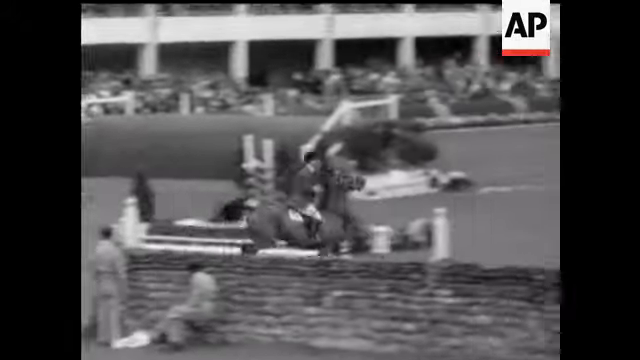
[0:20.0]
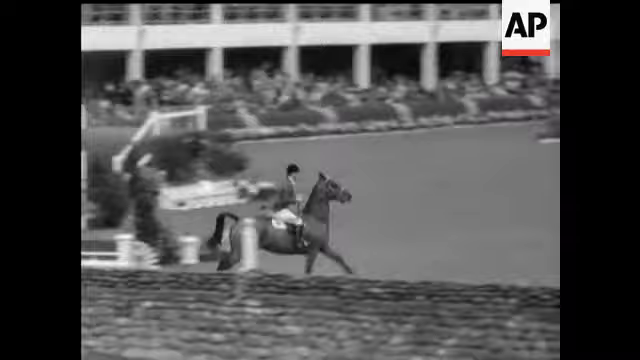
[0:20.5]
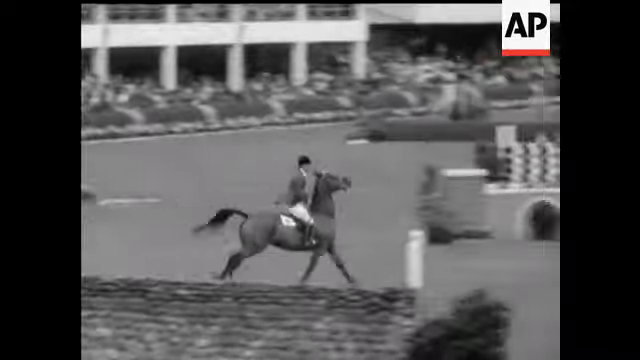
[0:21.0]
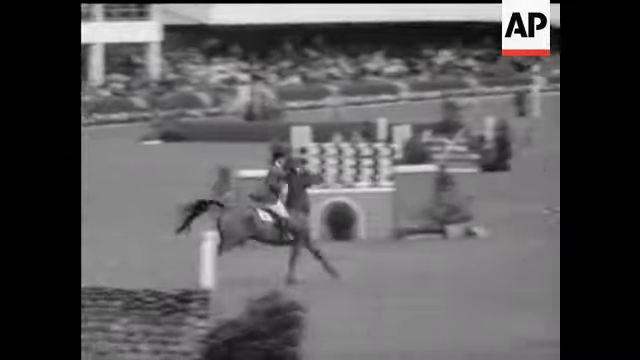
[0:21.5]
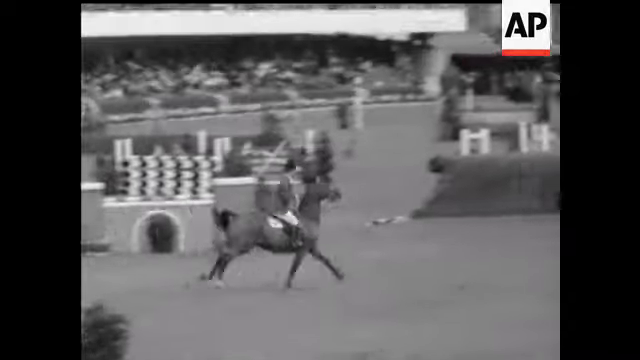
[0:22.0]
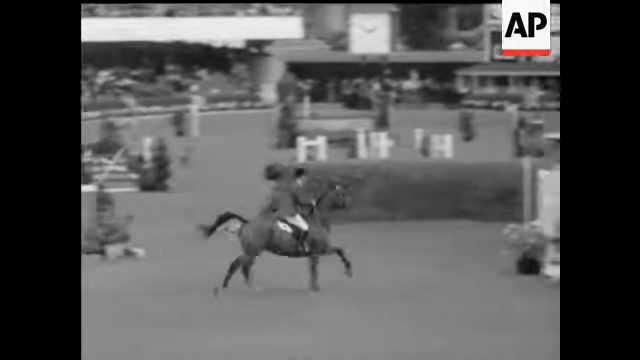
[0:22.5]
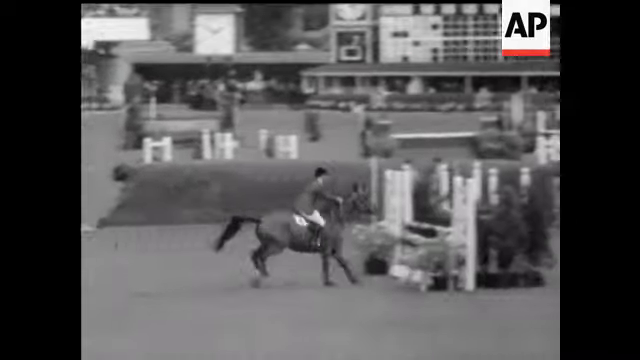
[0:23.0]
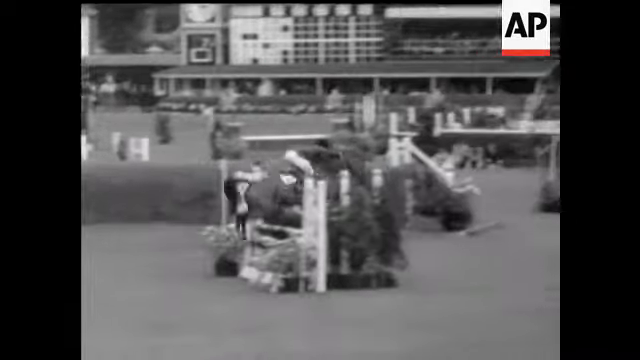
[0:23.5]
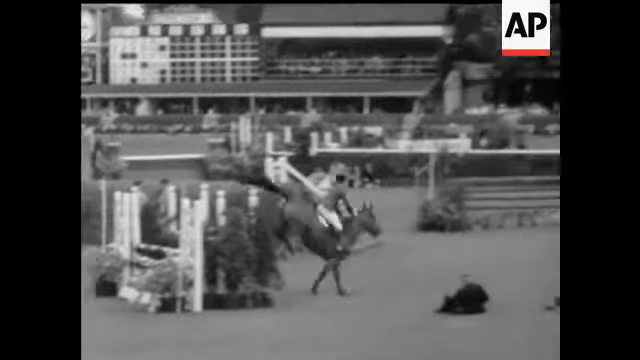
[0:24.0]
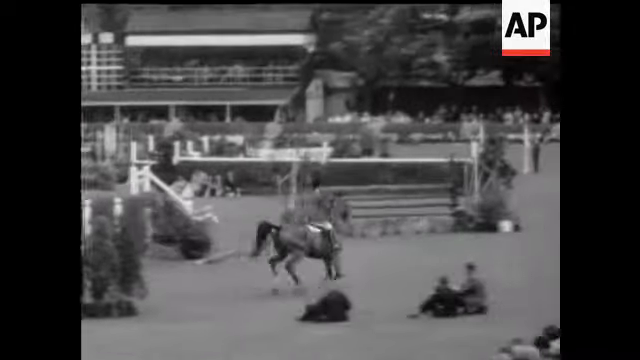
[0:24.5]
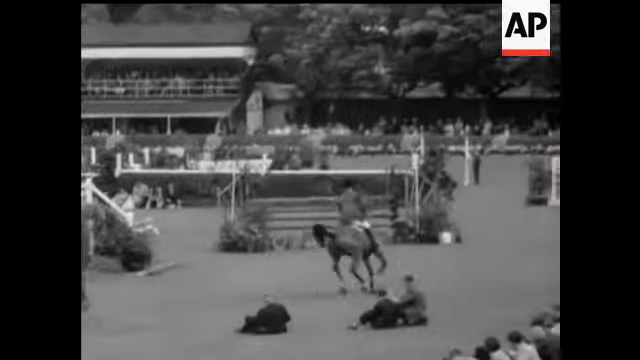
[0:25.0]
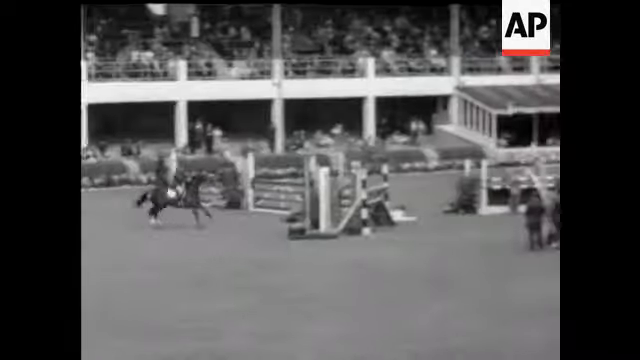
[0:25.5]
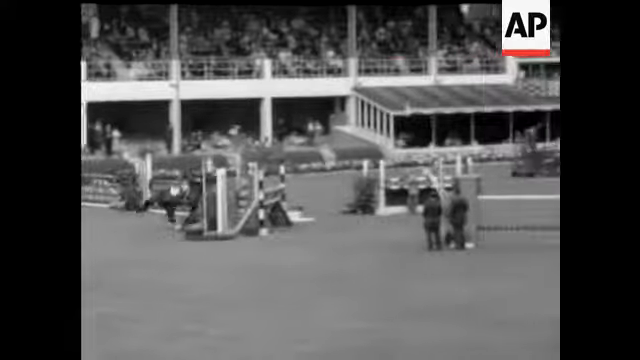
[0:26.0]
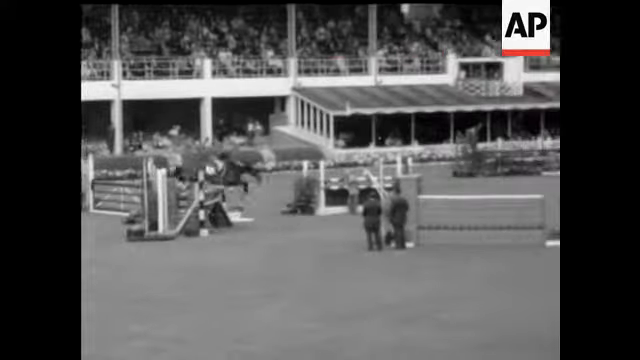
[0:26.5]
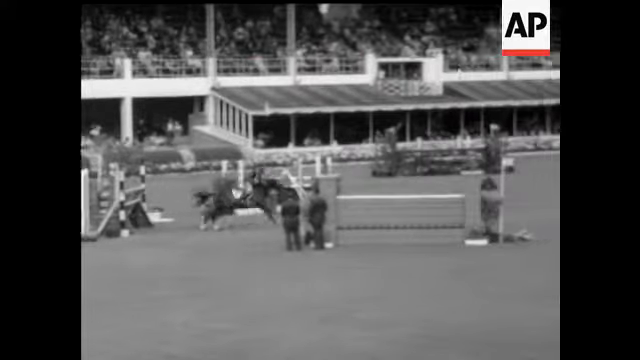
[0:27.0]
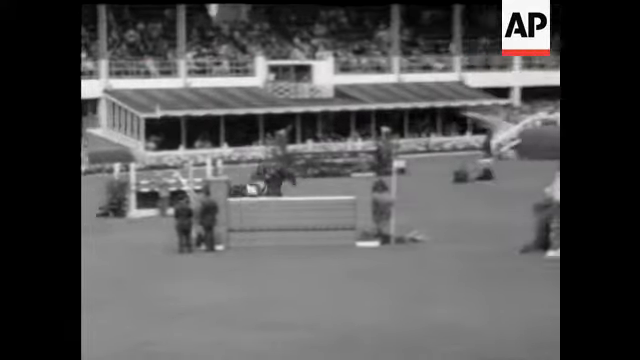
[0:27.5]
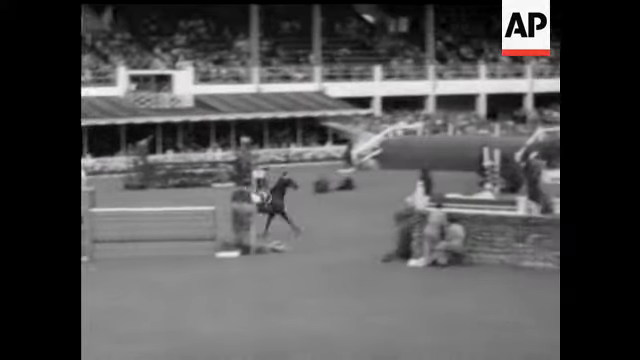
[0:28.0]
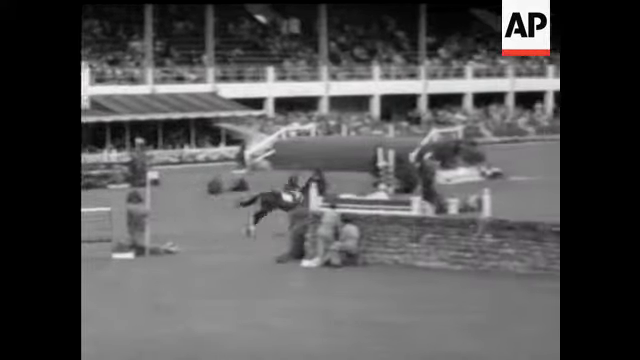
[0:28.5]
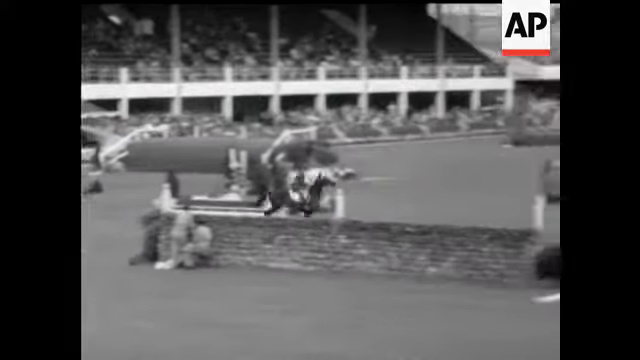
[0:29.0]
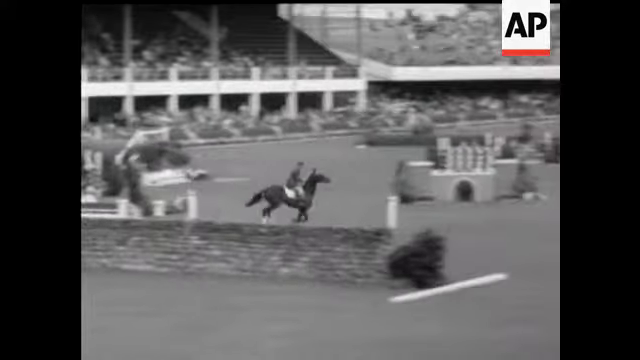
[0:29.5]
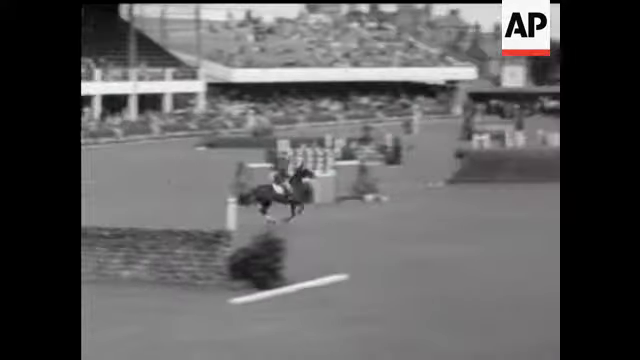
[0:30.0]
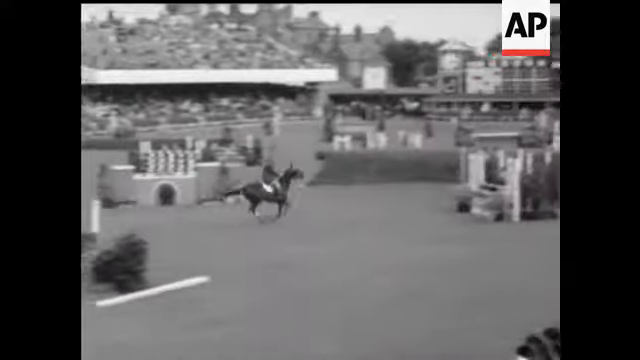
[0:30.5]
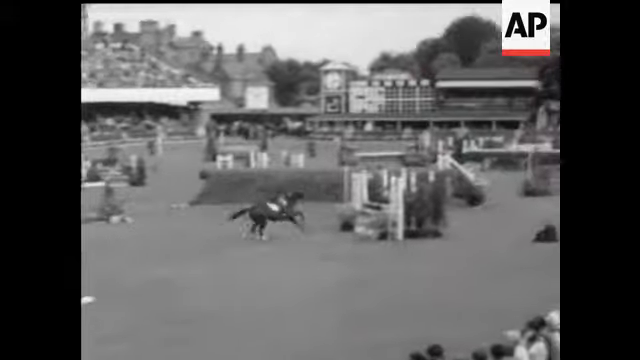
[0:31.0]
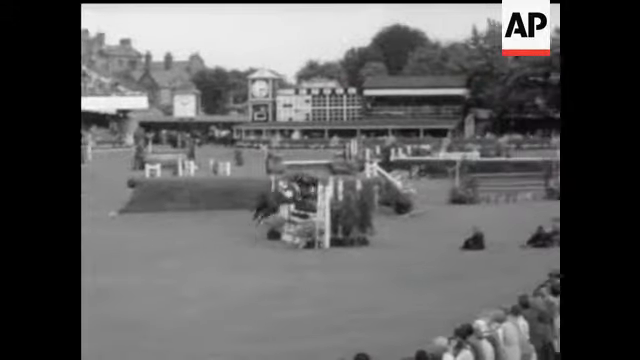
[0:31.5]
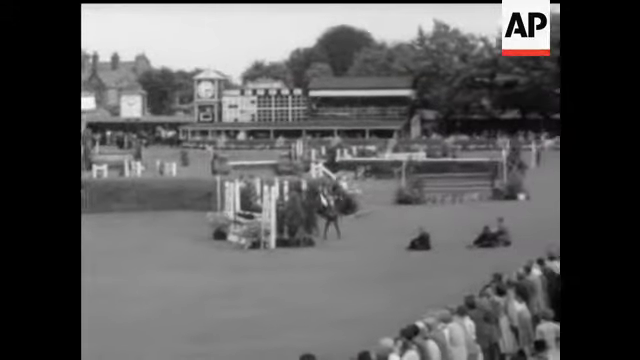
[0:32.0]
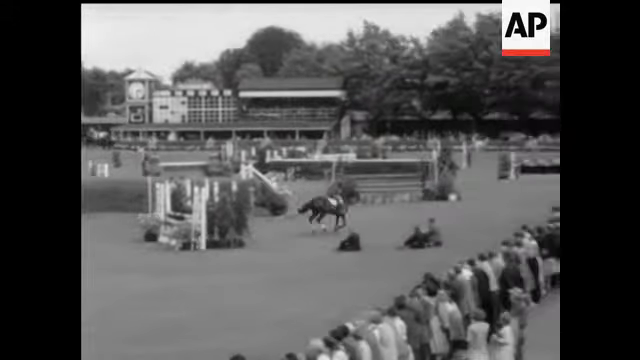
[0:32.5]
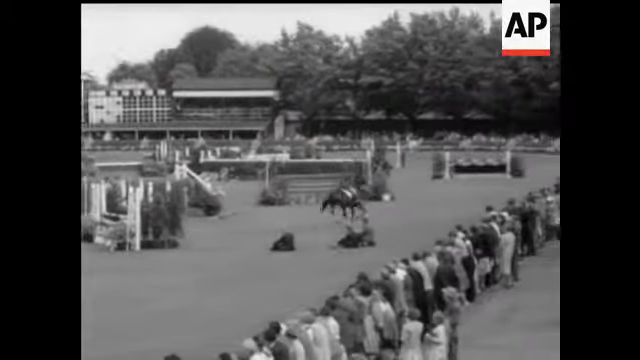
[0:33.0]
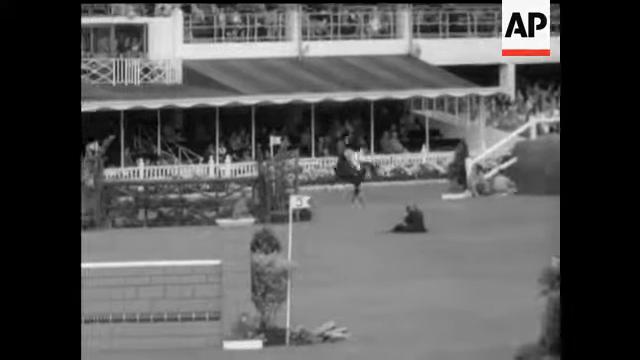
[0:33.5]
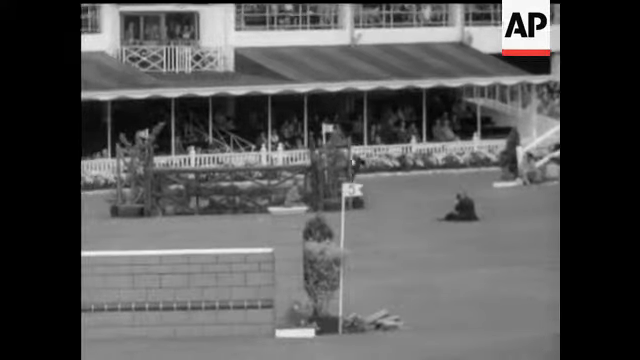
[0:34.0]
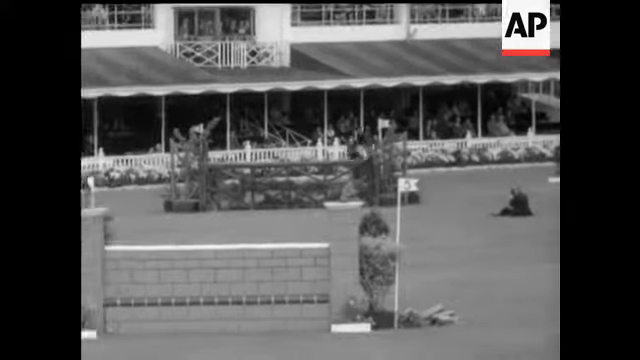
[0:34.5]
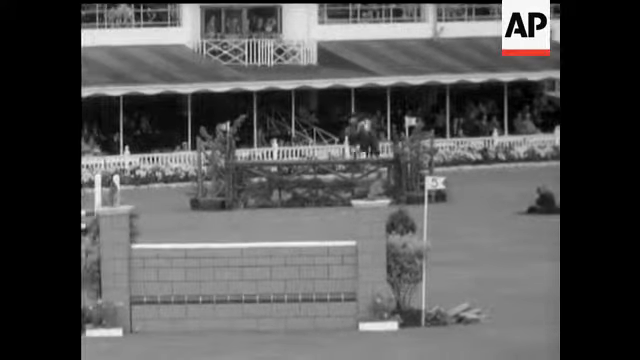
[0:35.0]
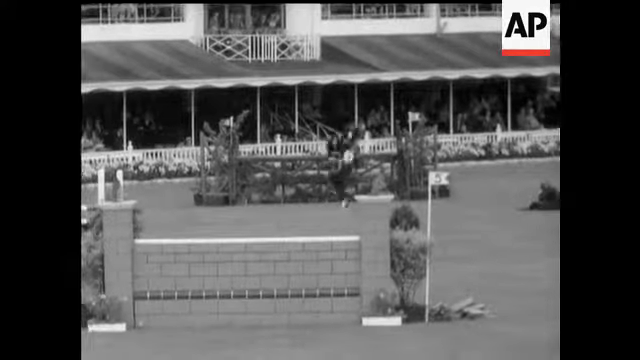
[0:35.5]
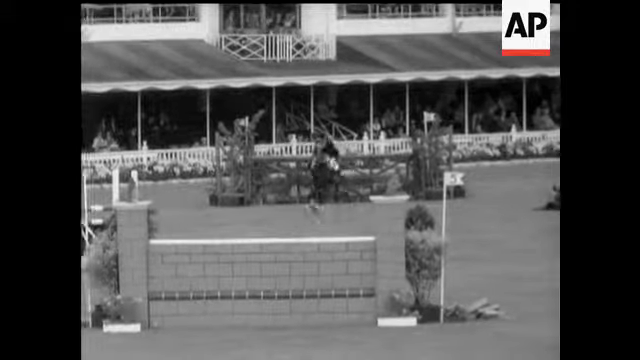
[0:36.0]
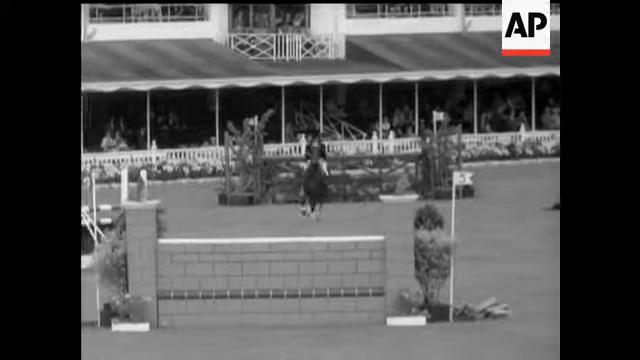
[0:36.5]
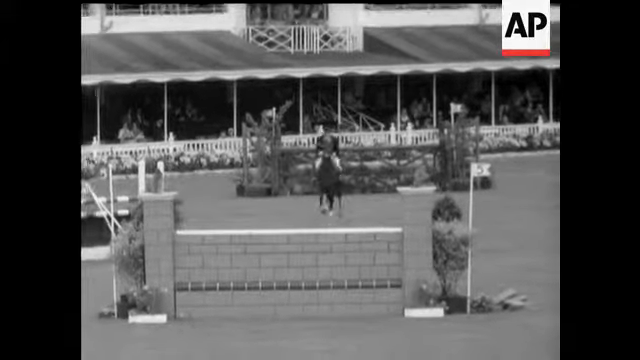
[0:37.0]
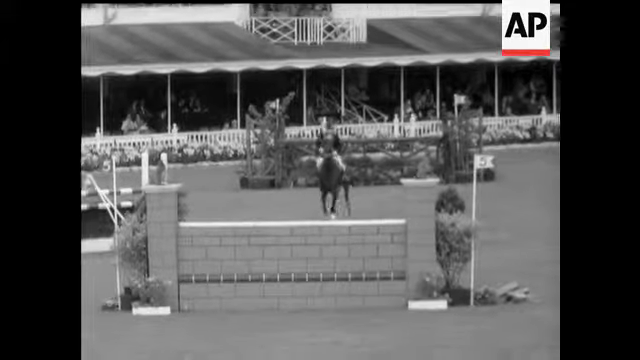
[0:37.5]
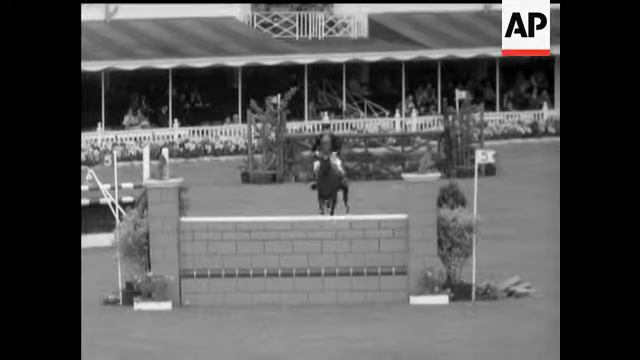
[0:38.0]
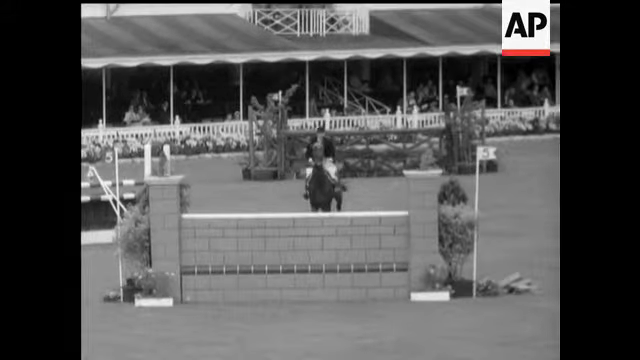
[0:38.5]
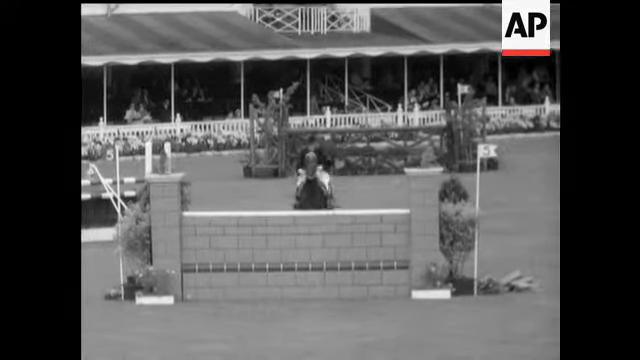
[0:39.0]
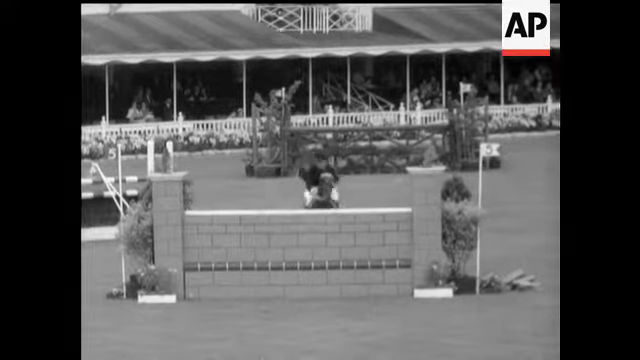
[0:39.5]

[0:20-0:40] Horses move about the obstacles in front of a crowded stadium, jumping over jumps while their riders masterfully maneuver them and show off the horses' skills to the crowd. In the background is a building with a long, low roof, probably the VIP area, where many people are sitting. A head-on shot shows a horse running towards a brick wall and leaping over it without touching any part of it. The jockey wears a gray jacket, white pants, black boots and a black helmet. The horse's saddle is white, and the horse has a black tail and looks to be dark brown, though this cannot be told for sure because the footage is black and white. Several people are out in the competition area, standing near the jumps, and trees are in the background.